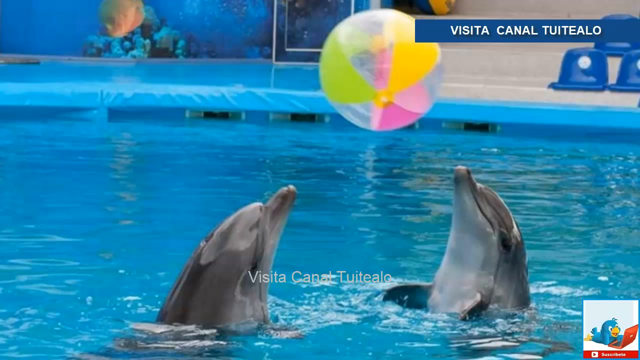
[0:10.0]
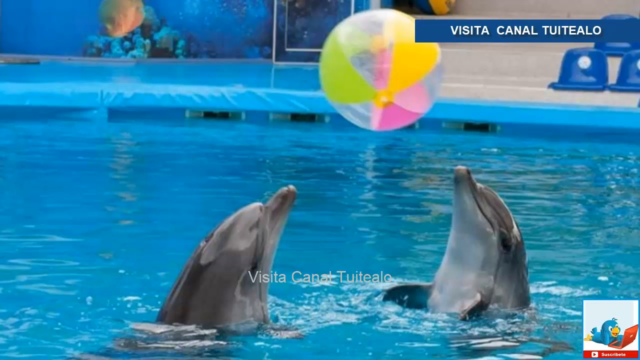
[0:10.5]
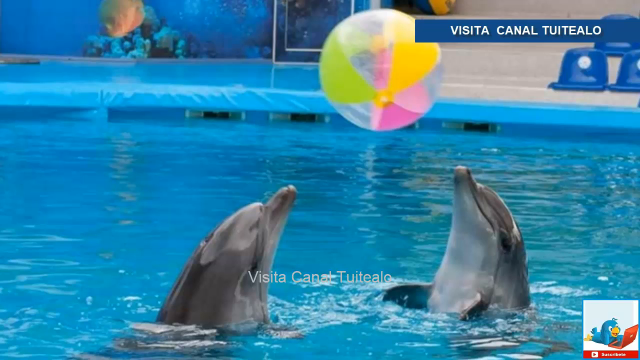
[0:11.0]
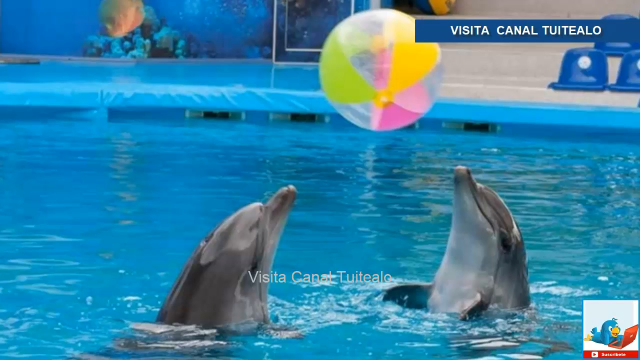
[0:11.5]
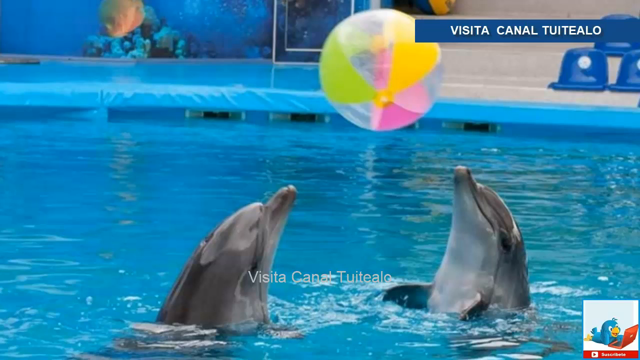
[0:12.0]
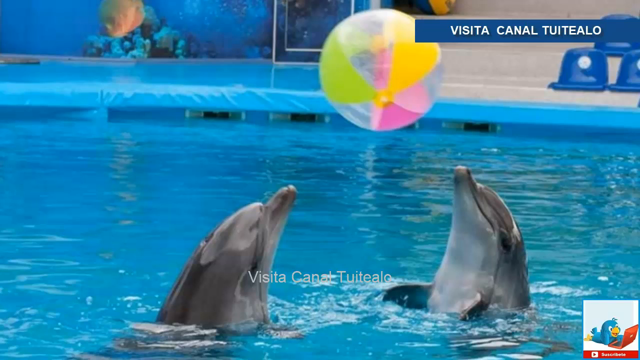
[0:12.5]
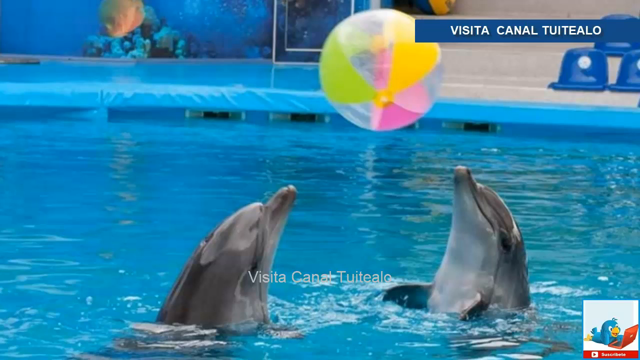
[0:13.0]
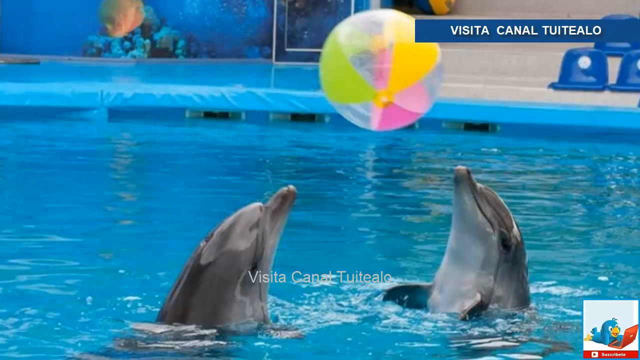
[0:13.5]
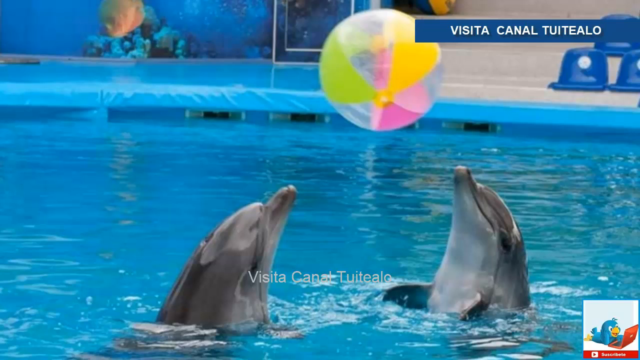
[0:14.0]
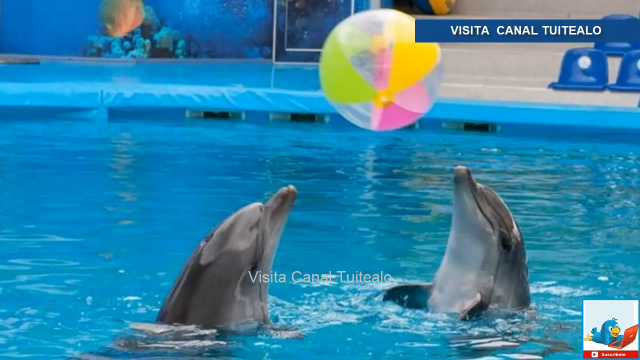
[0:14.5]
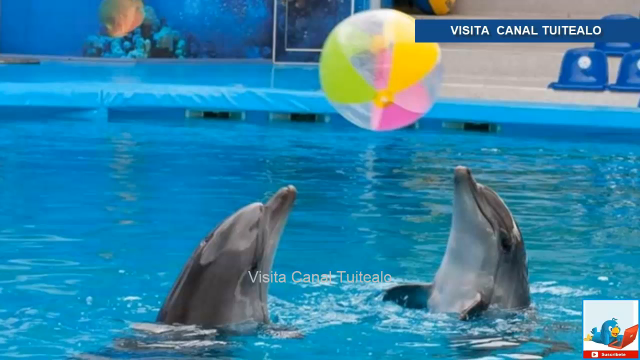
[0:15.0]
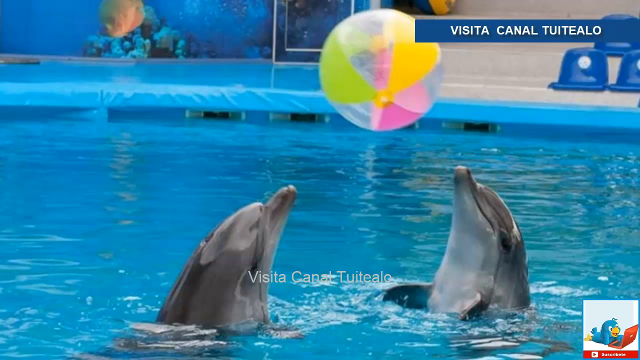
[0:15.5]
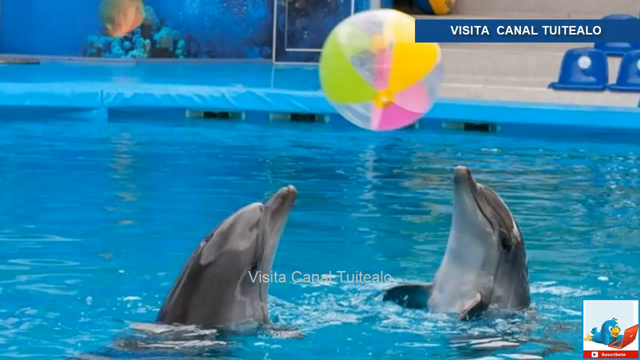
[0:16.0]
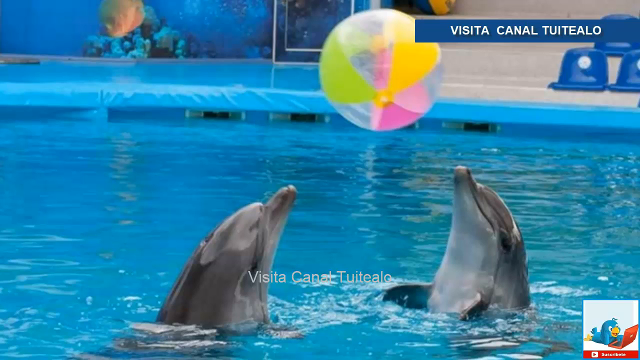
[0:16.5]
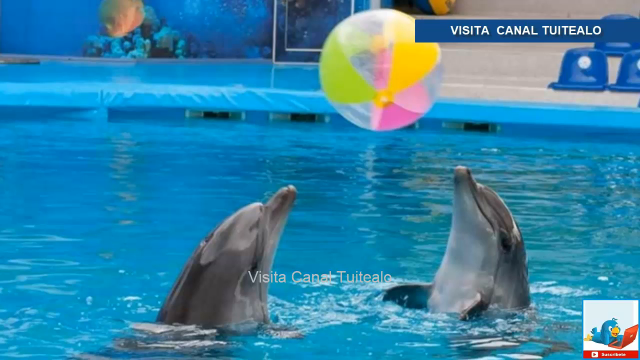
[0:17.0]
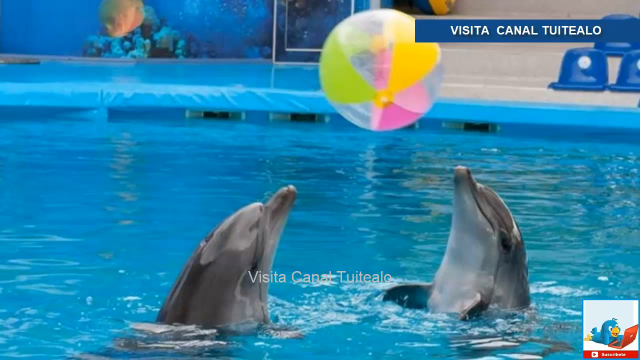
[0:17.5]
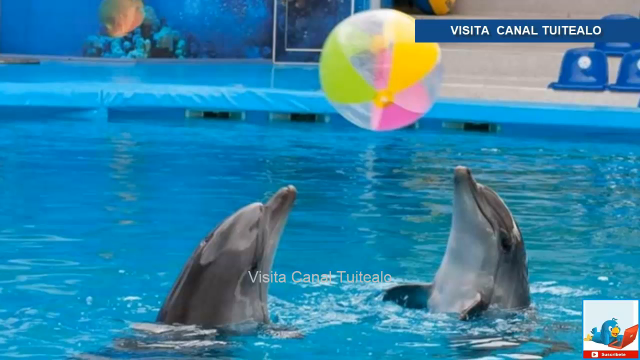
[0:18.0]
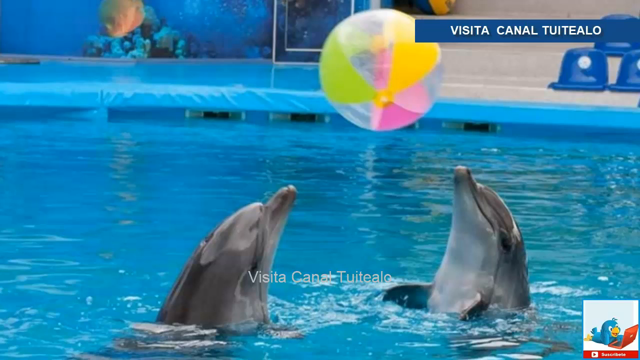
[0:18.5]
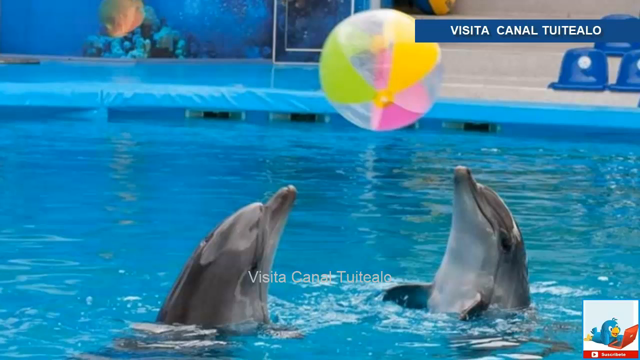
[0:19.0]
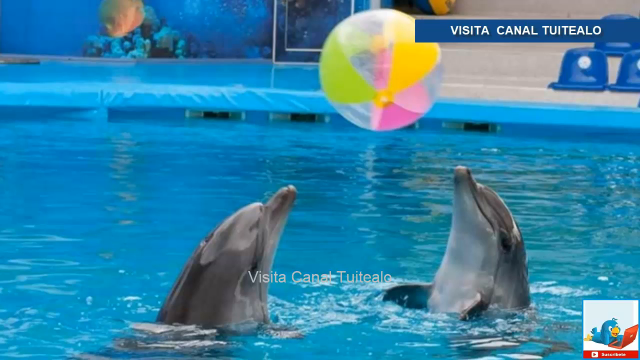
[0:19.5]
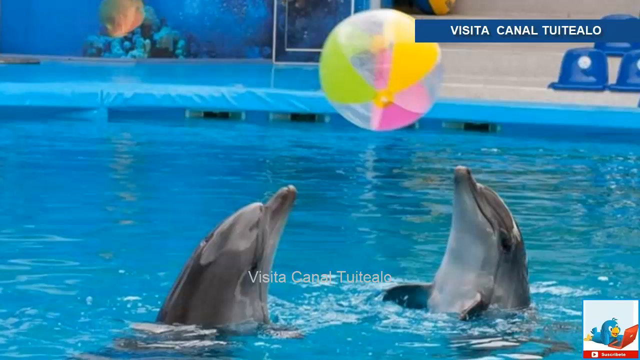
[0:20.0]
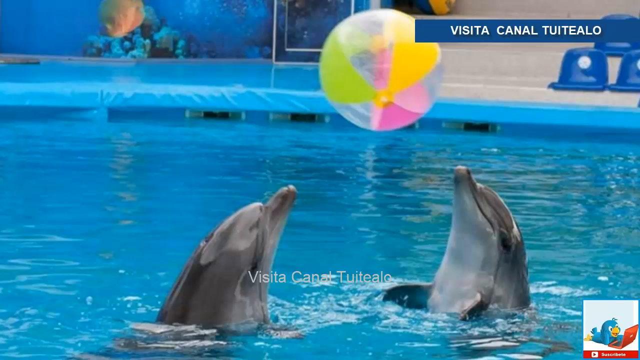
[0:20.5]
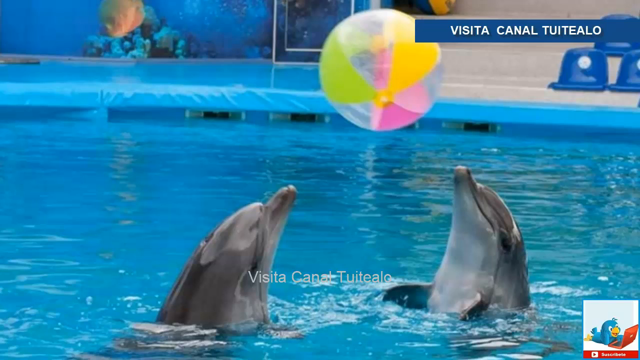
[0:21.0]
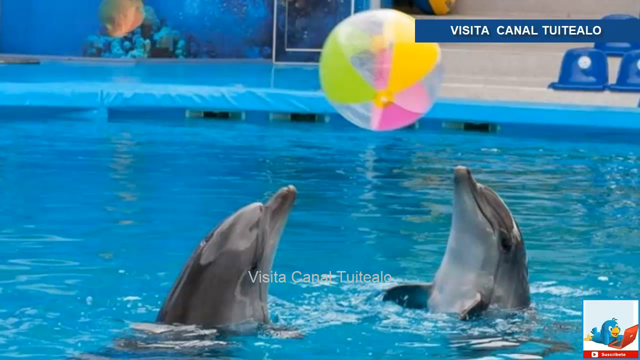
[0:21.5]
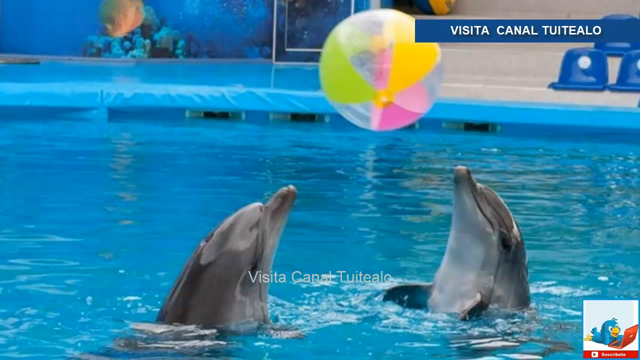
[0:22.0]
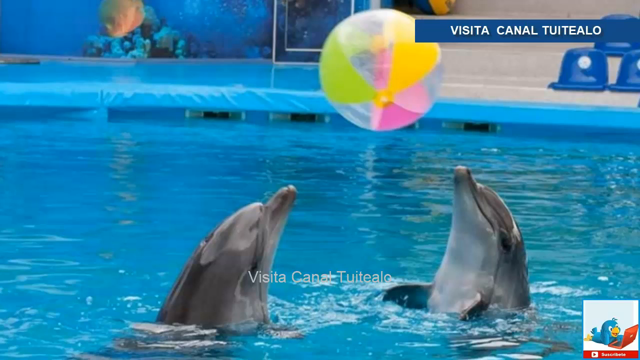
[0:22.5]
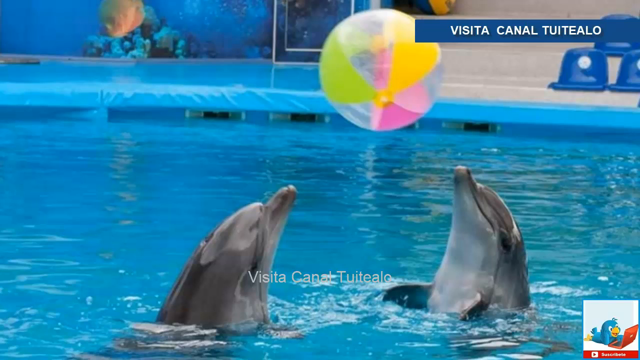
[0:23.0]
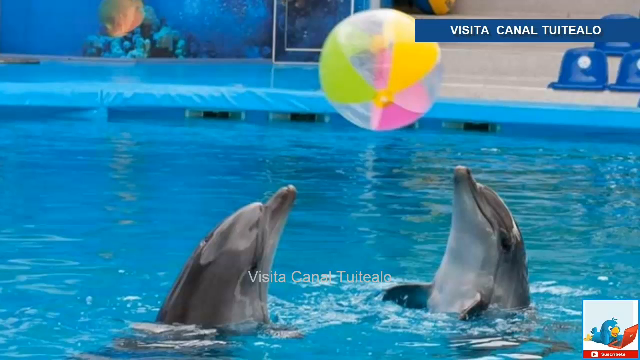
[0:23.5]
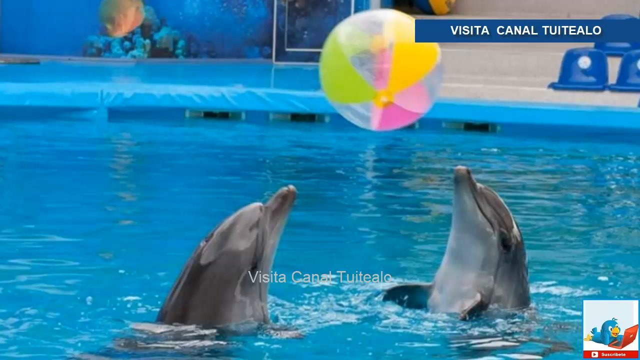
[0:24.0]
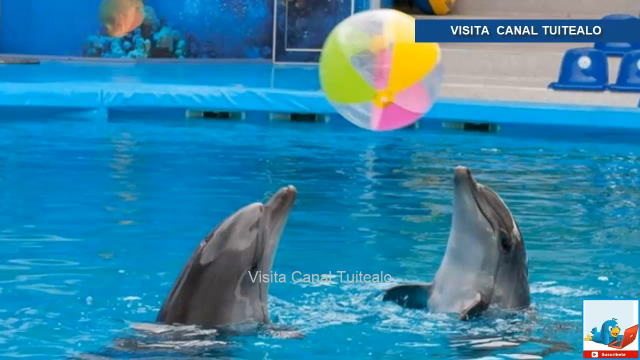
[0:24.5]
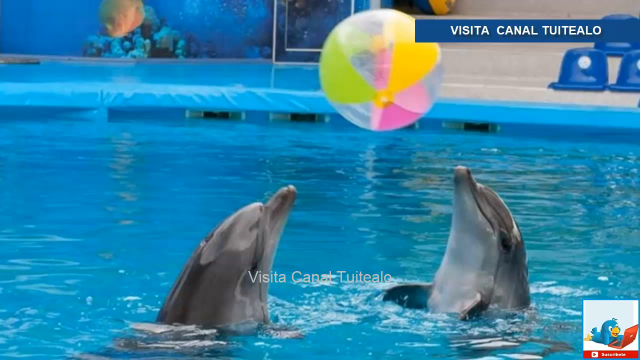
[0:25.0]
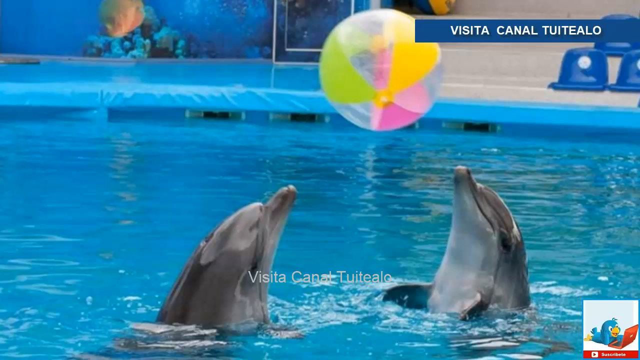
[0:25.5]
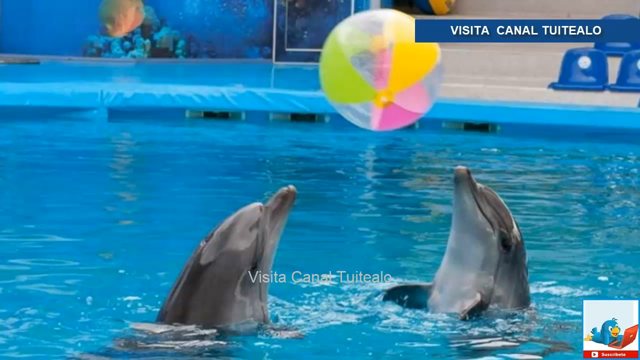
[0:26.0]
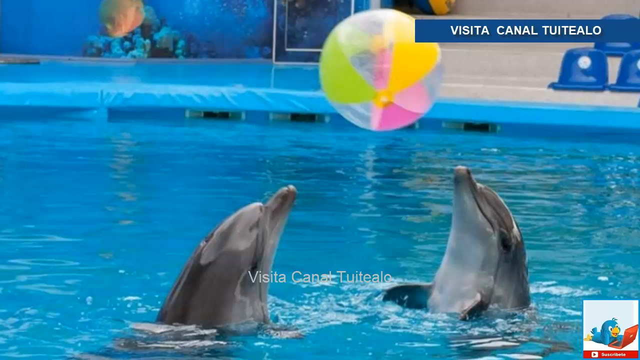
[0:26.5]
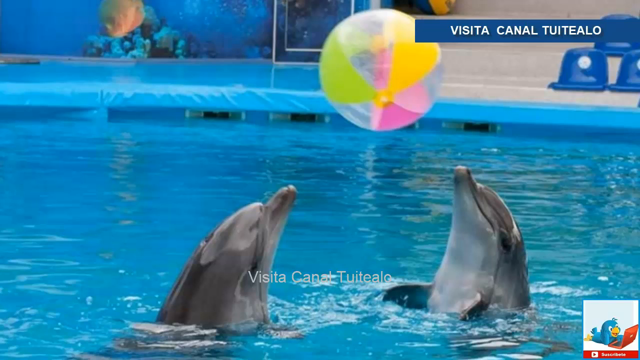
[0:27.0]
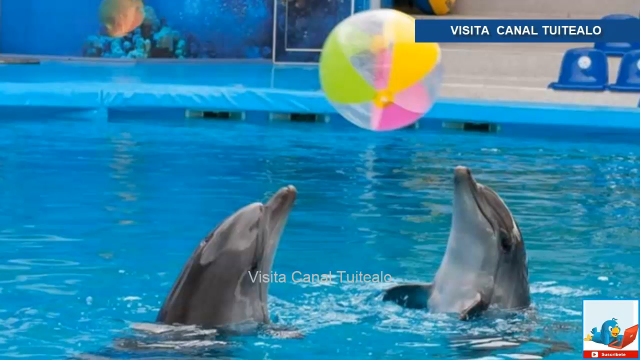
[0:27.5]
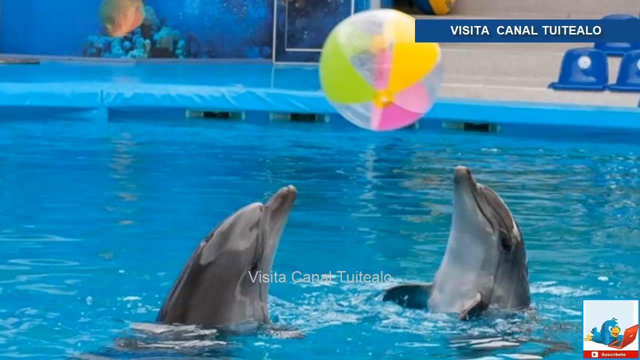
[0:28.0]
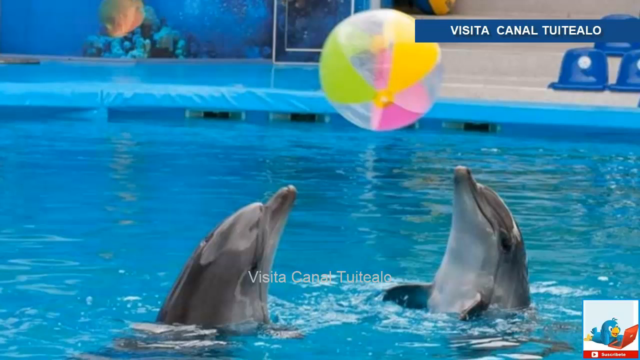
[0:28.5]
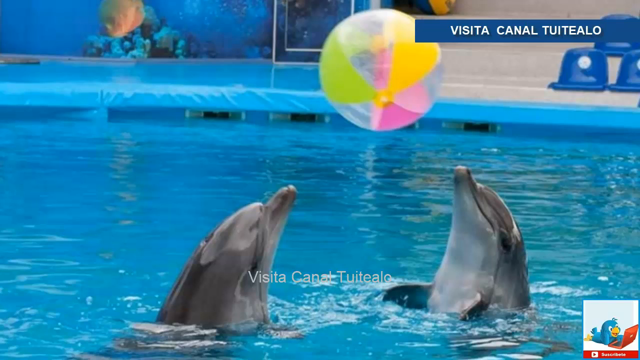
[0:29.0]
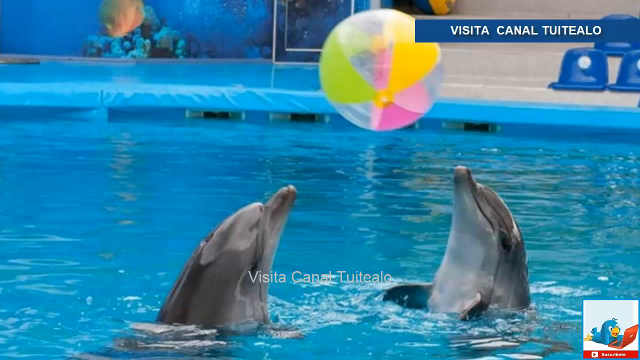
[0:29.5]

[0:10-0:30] The still photograph of the two dolphins facing each other continues. The beach ball has different colours: going around from the left, there is green, then a clear section, then yellow, clear, pink, clear, and back to the green. Blue trim runs around the swimming pool, and the water is blue and looks very still. The dolphins look wet. Between the dolphins, white writing reads "Besita Canal Tua Tielano". The ducts that clear debris from the swimming pool are visible across the top of the screen. The photograph looks like it was taken outside on a sunny day.